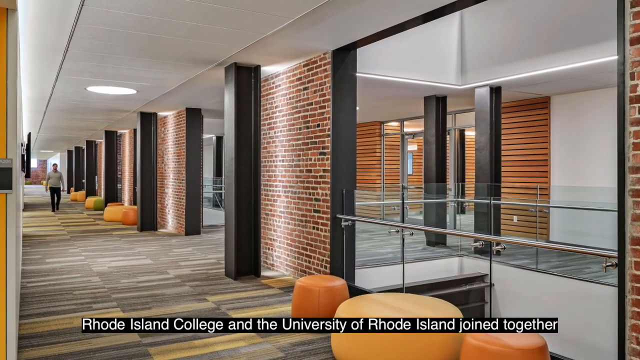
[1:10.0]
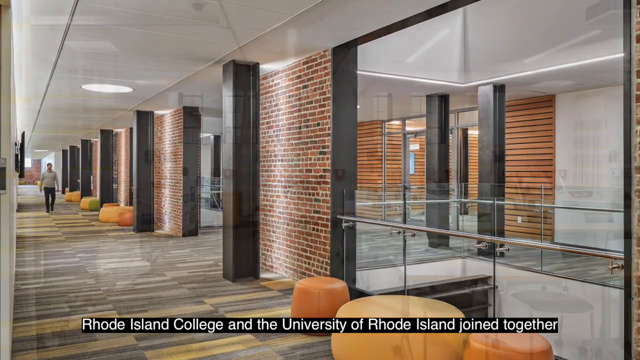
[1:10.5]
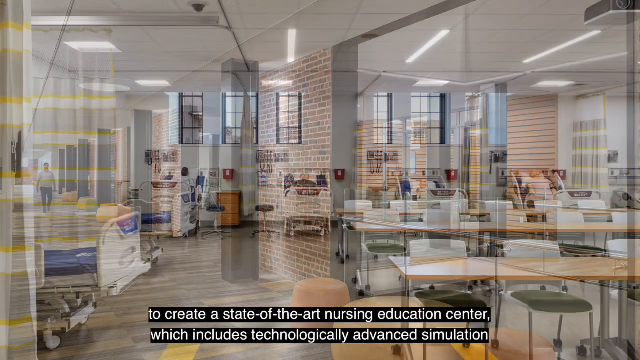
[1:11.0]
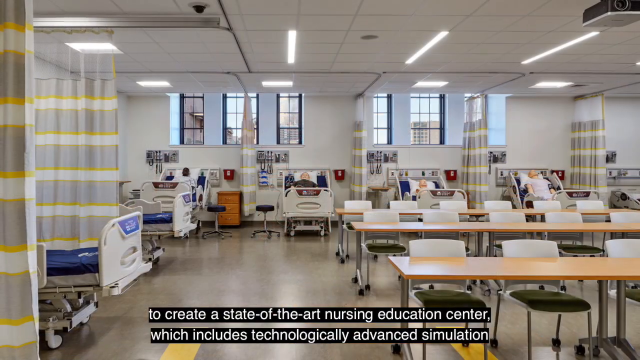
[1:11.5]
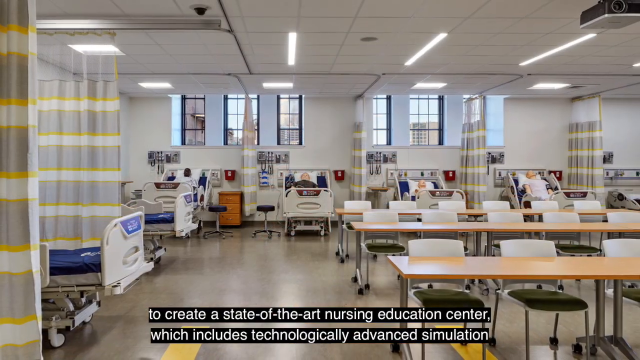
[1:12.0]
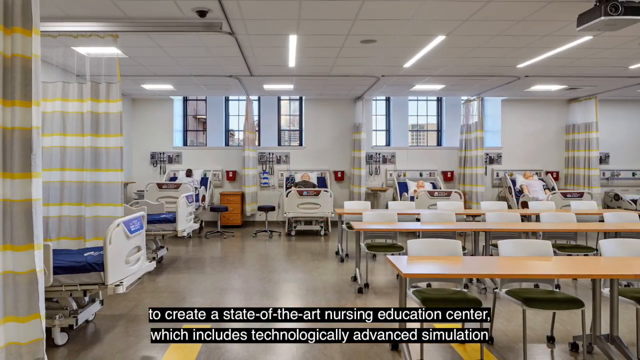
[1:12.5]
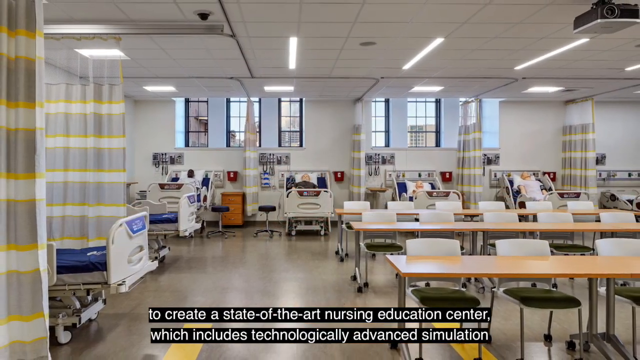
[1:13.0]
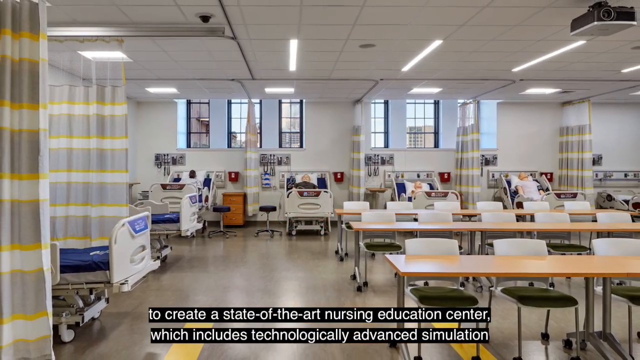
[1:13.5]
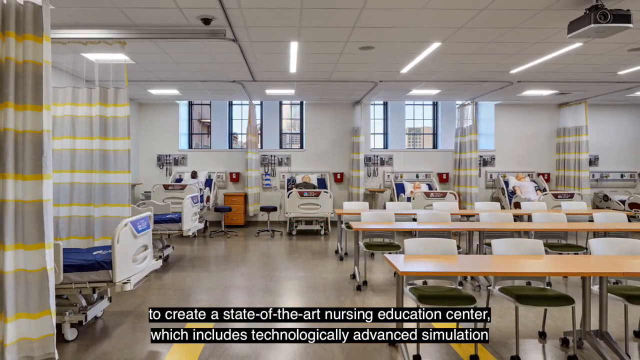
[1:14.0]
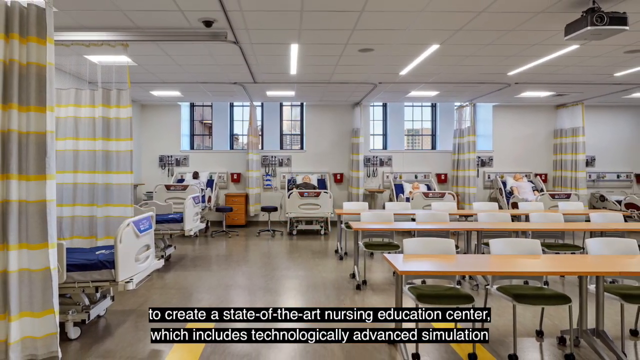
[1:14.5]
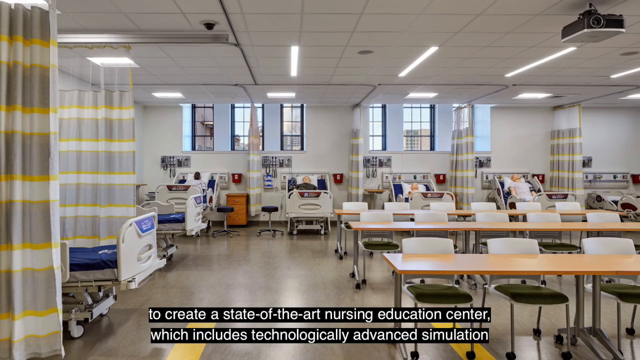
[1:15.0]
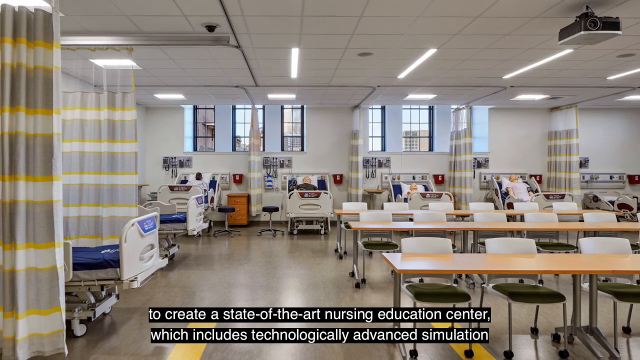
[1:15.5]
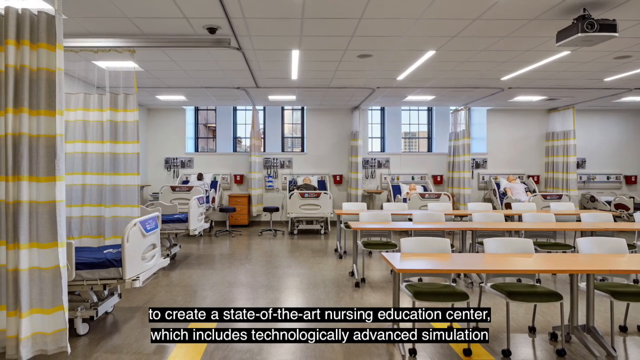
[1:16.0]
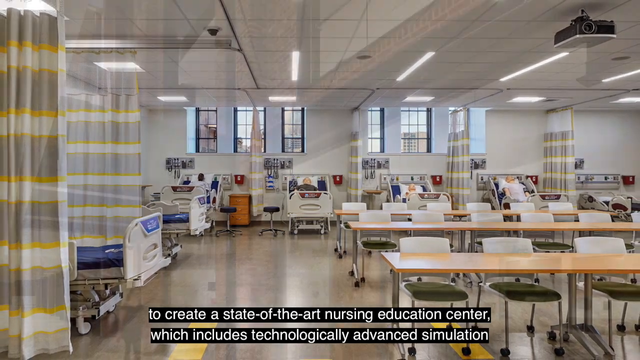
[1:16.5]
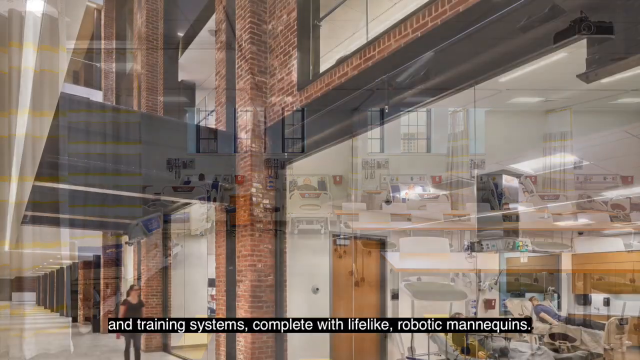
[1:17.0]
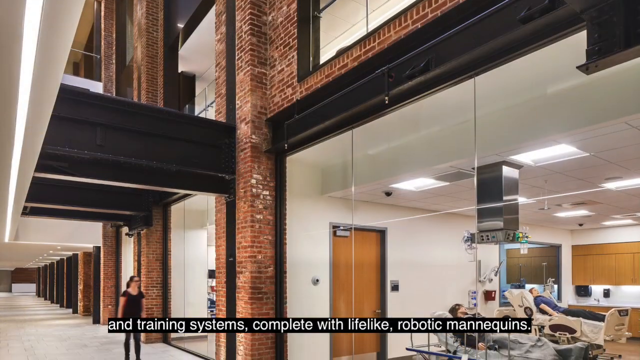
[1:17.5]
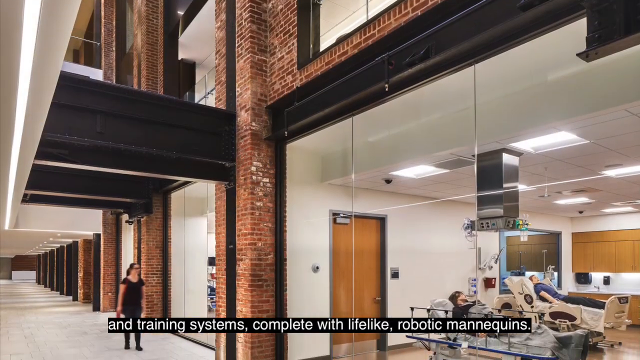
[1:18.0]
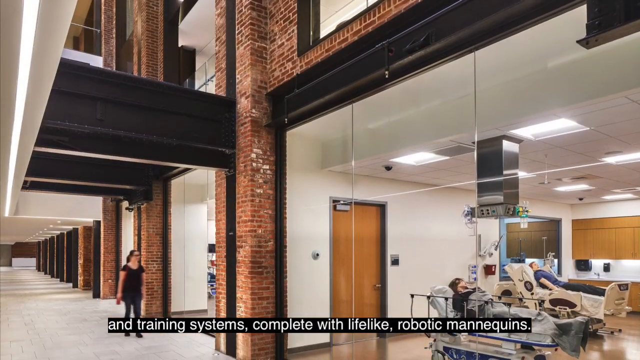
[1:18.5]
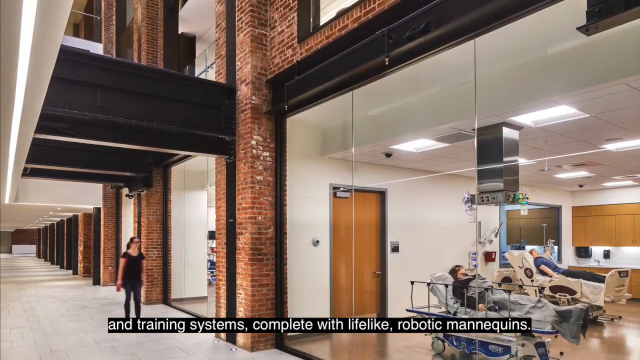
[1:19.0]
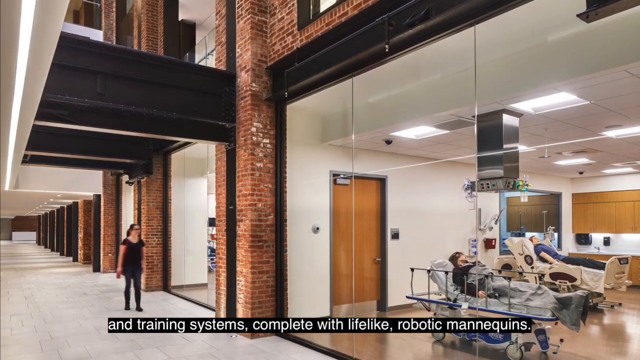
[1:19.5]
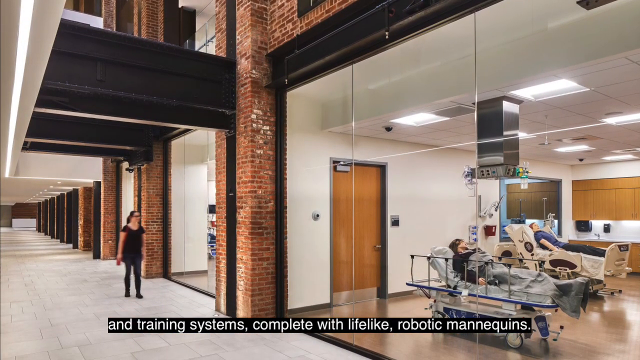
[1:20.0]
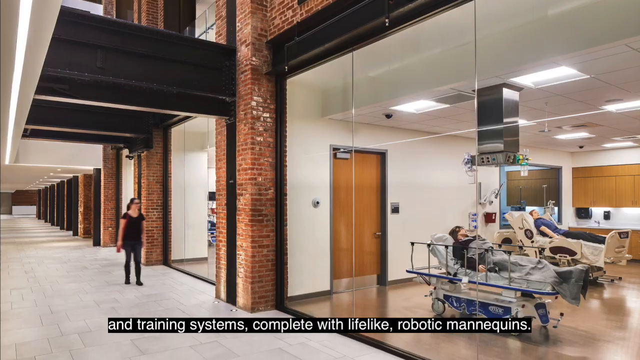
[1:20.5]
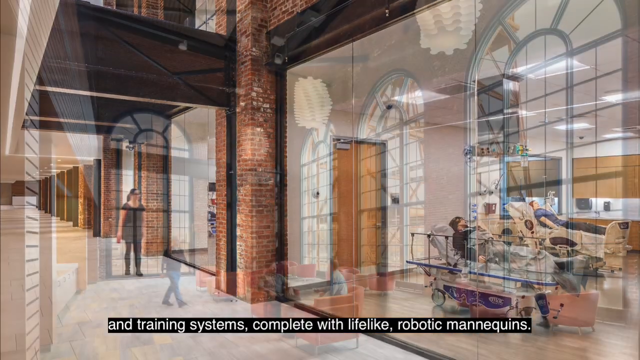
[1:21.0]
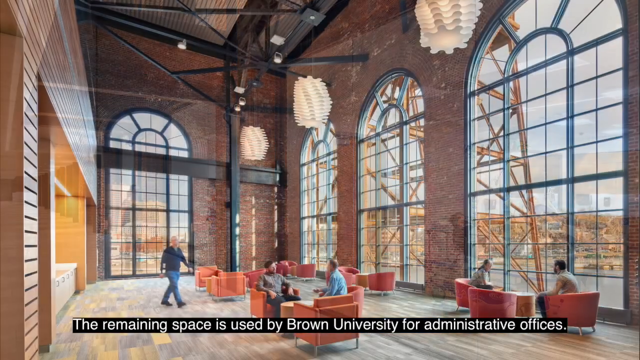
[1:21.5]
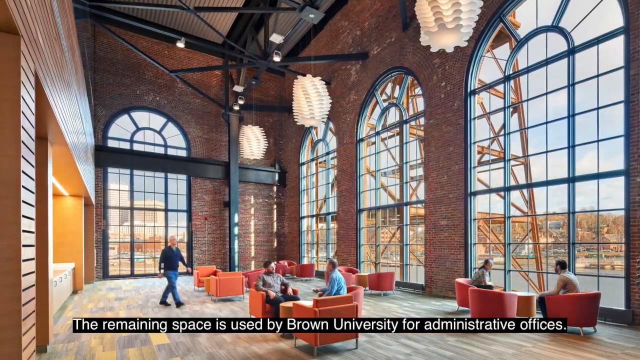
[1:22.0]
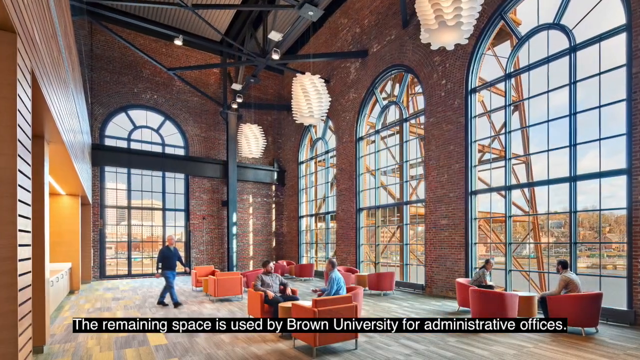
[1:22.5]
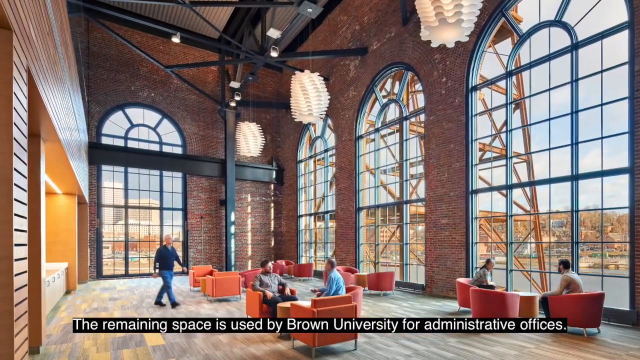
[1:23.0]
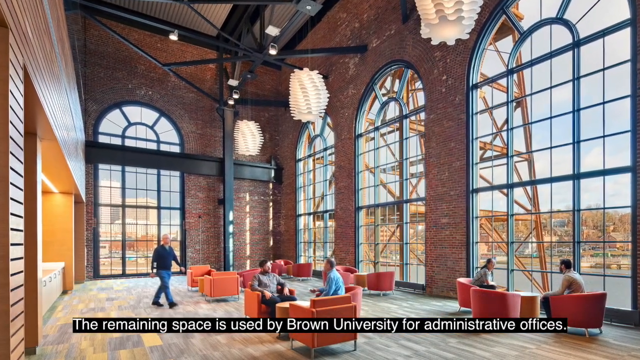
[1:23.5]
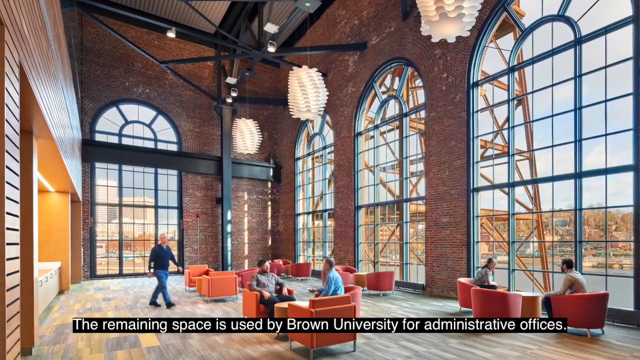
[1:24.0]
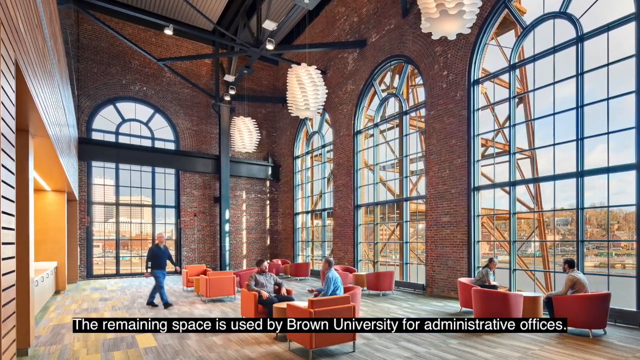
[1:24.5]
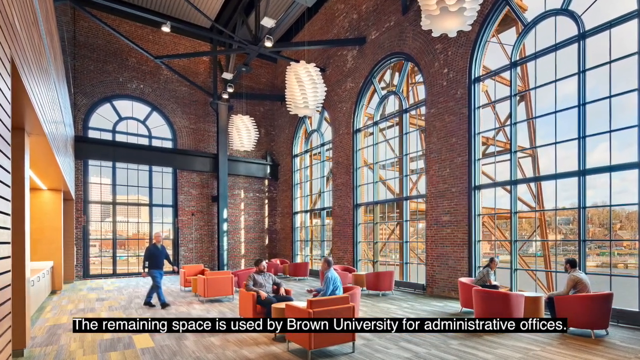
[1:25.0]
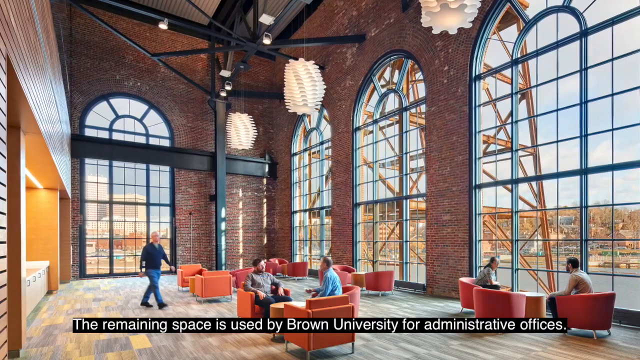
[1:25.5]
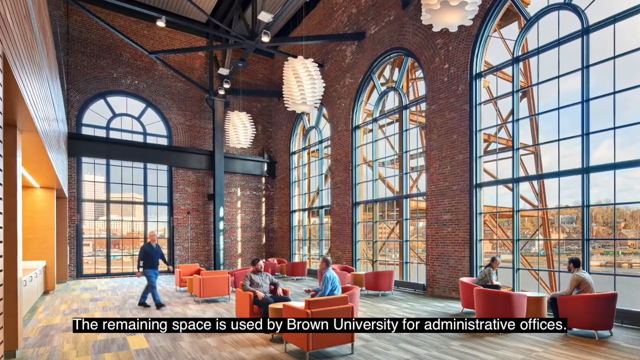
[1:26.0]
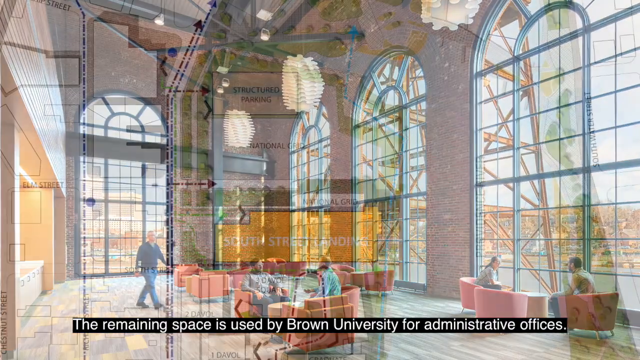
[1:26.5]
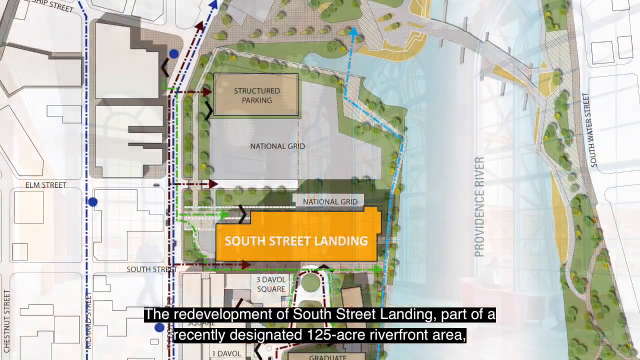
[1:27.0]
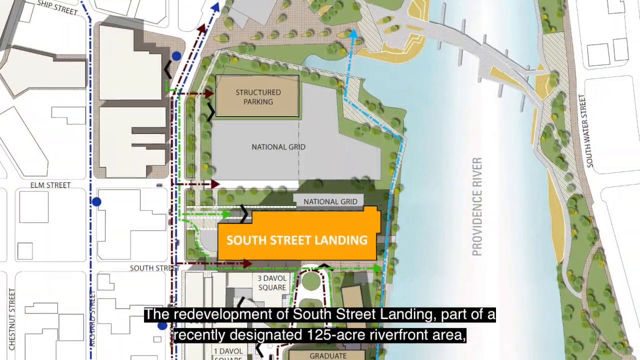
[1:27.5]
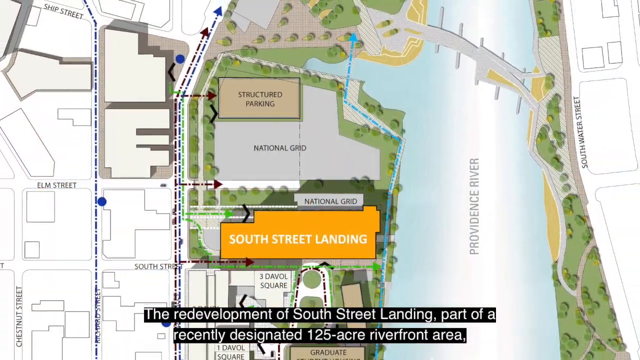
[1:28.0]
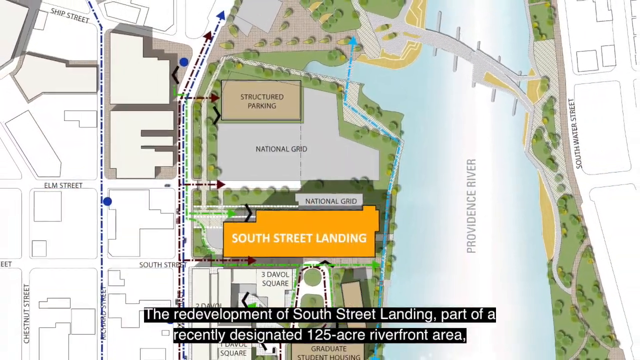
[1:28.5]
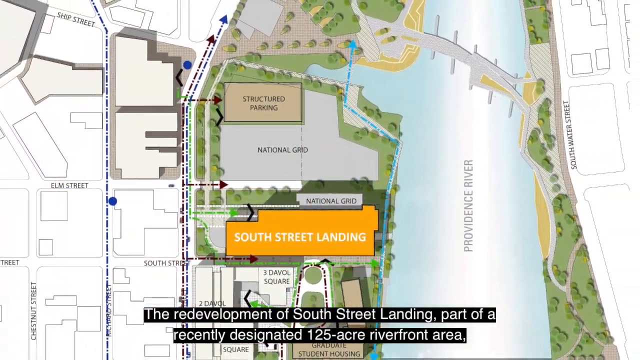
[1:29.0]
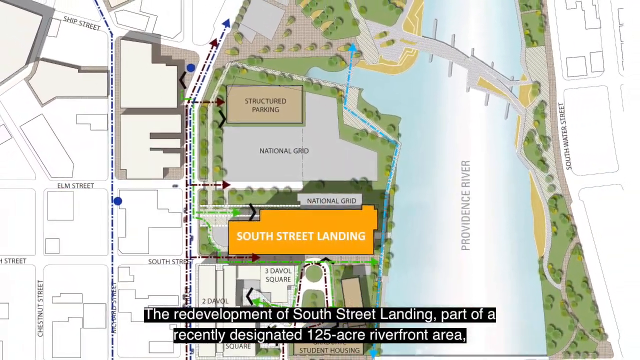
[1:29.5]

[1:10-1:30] The inside of a room appears to contain a hospital bed, some curtains, and some desks with chairs, with some windows on the back wall. Text below reads "to create a state-of-the-art nursing education center, which includes technologically advanced simulation." The camera slowly zooms out of the room. The next image shows a room with two hospital patients and hospital beds on the right-hand side, and a wooden door and some cabinets in the background. On the left-hand side is a hallway, where a woman in a black shirt is standing. The next image shows a very open room with very large windows and orange and red seats. Two people are having a conversation, another two people are having a conversation towards the windows, and one man is walking by. The next image is a map of the South Street Landing area, with a river to the right of it labeled "Providence River." Text reads "the redevelopment of South Street Landing, part of a recently designated 125-acre riverfront area."